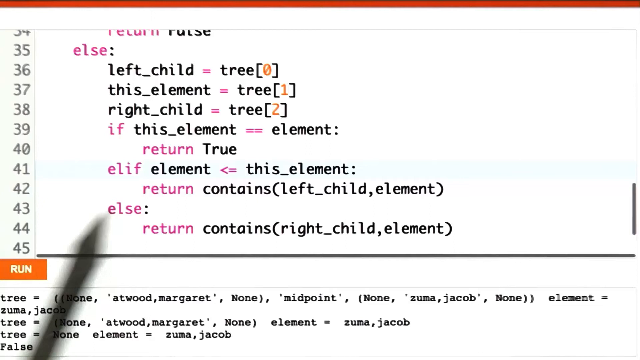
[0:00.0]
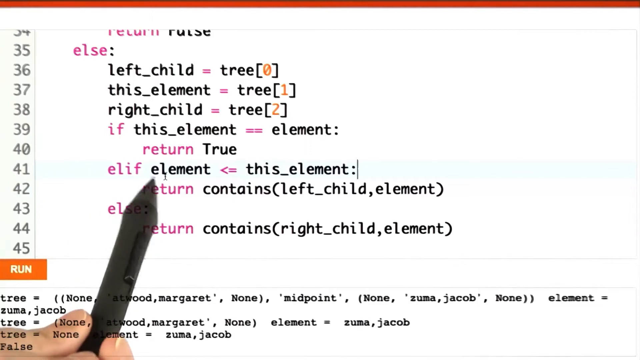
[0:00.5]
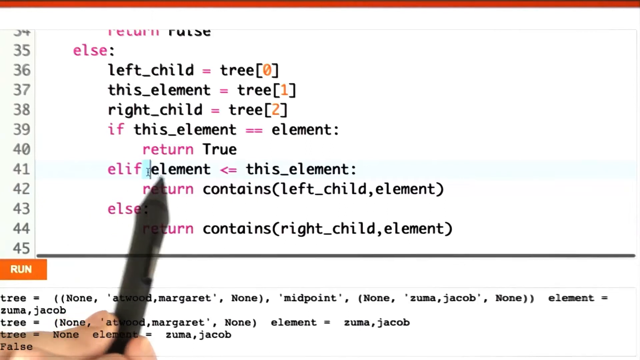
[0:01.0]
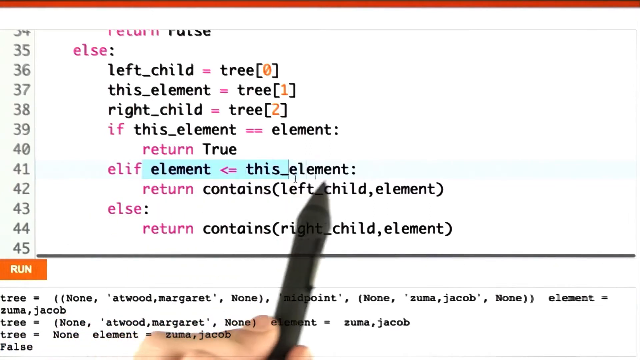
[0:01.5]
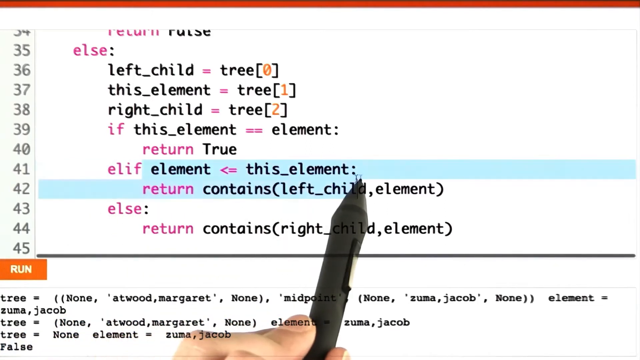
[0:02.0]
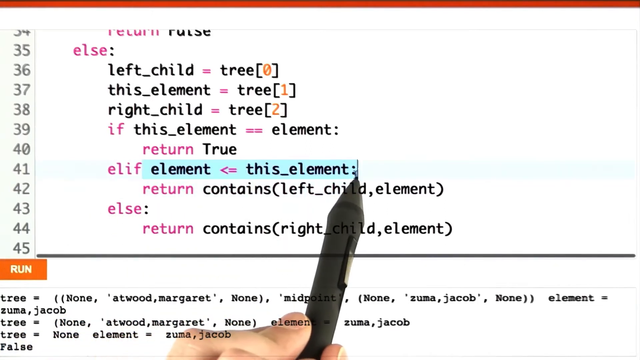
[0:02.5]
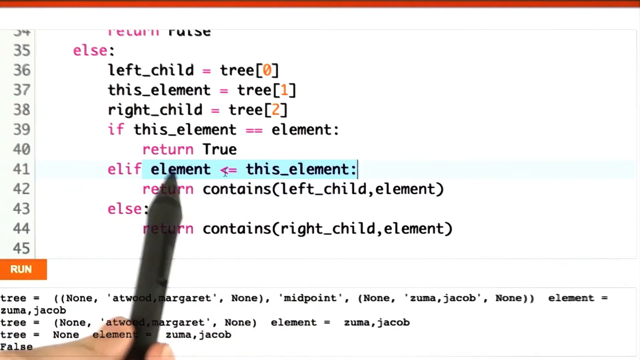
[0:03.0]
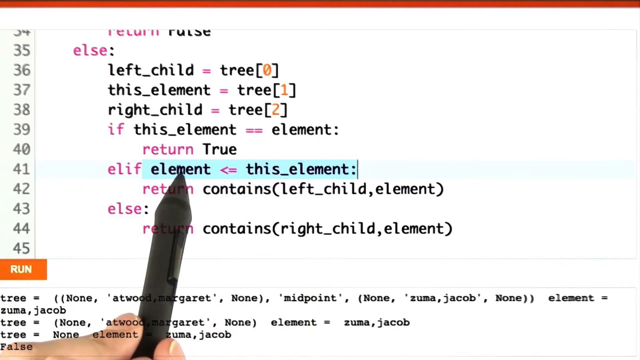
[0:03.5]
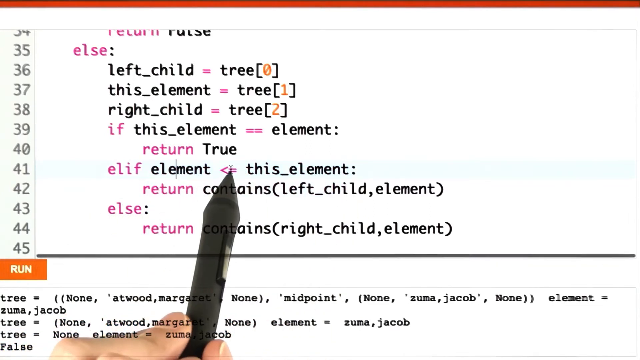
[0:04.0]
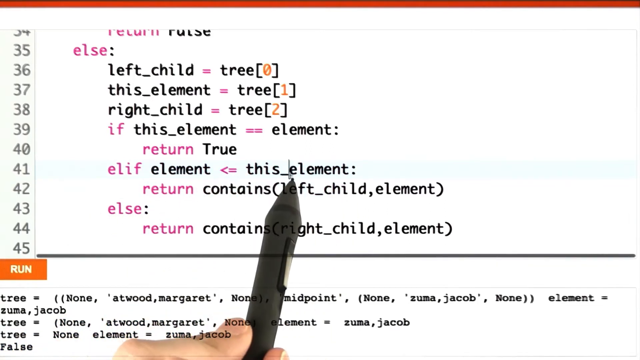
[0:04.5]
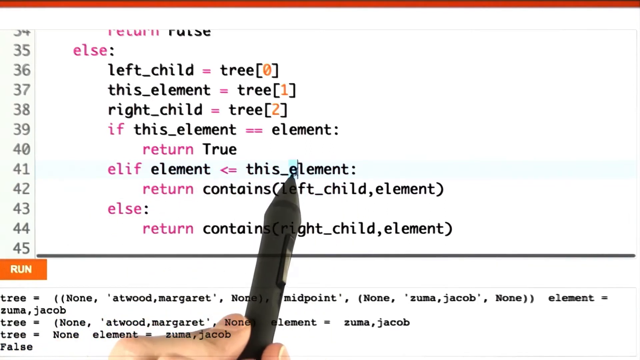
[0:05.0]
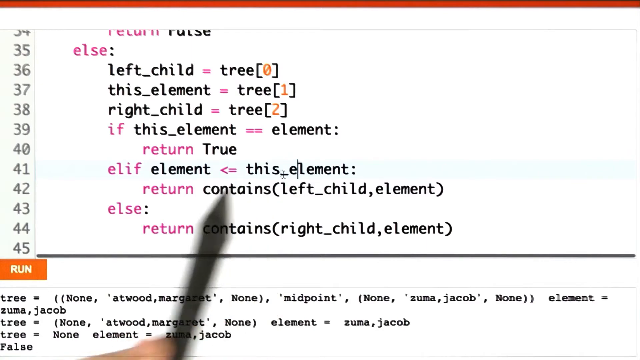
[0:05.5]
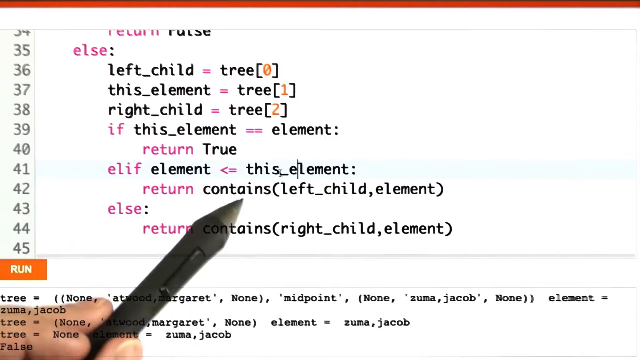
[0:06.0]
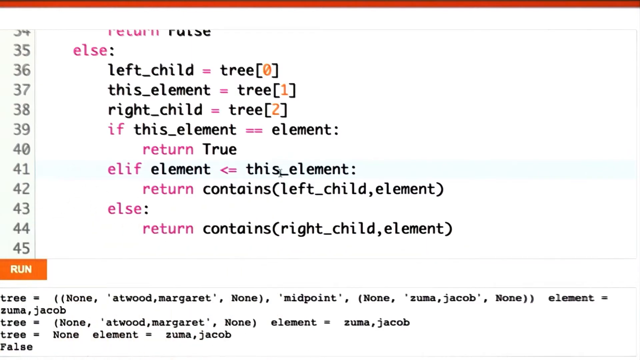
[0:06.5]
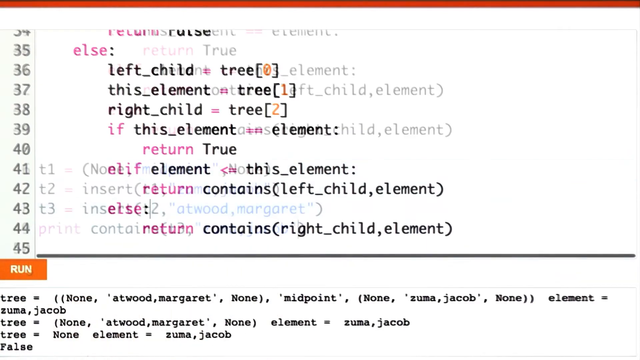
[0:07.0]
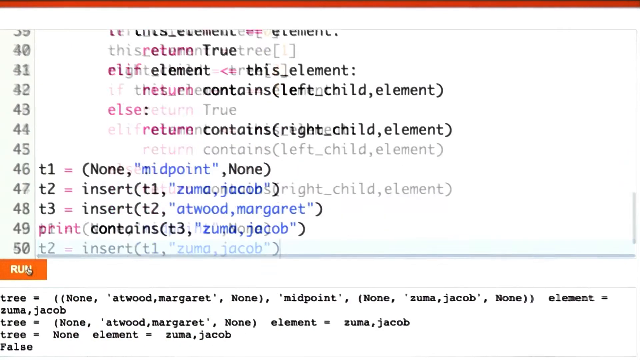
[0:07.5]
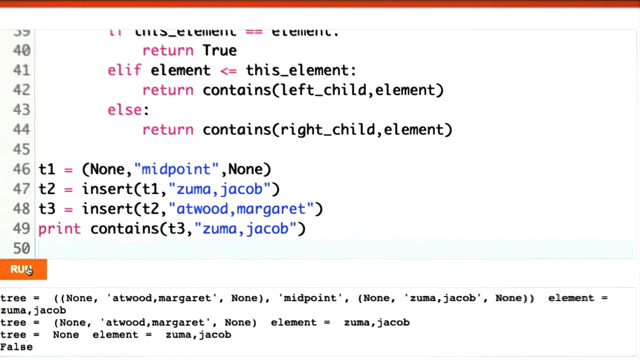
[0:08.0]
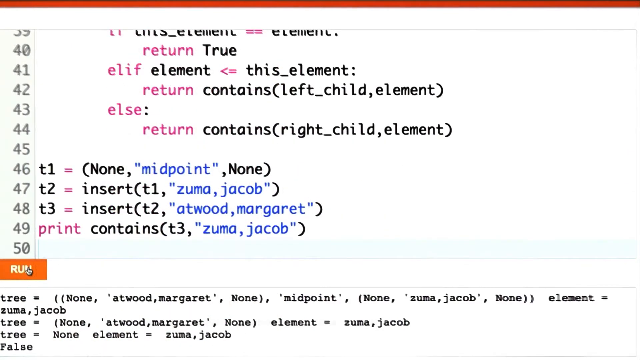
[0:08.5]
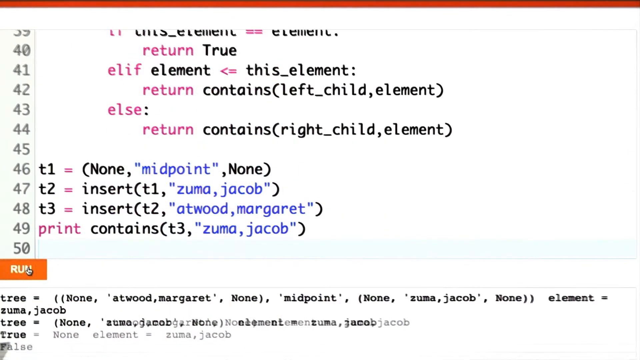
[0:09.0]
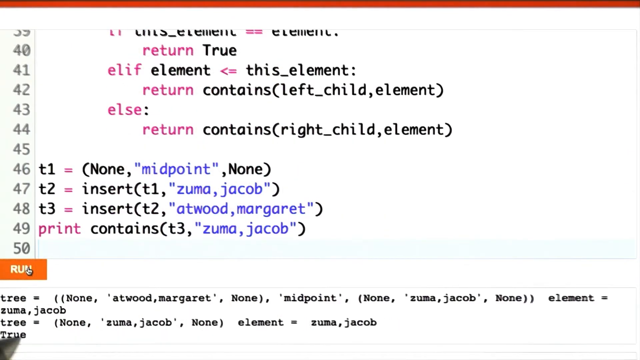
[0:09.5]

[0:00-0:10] Program source code is on screen, with line numbers on the left and the programming logic in the middle. One line reads "else", apparently part of an if-else block. The logic sets left child equal to tree zero, element equal to tree one, and right child equal to tree two, so it seems to be a tree algorithm. Next comes a check: if this element equals the element, it returns true; if the element is less than or equal to this element, it returns contains on the left child element. A black pen highlights the else-if condition where the element is equal to or less than this element. The view then scrolls down to show more source code, with T1 equal to none, midpoint none, then T2 and T3, which appear to be connected together to show the relationship of a tree.